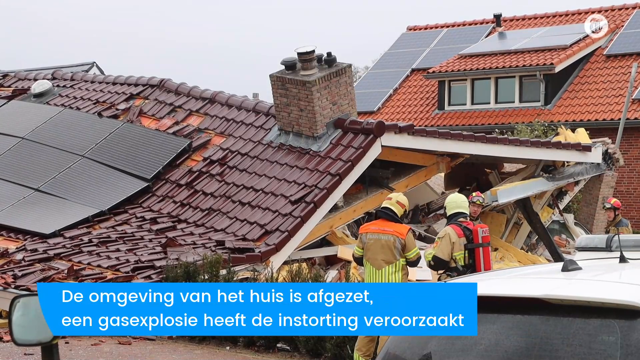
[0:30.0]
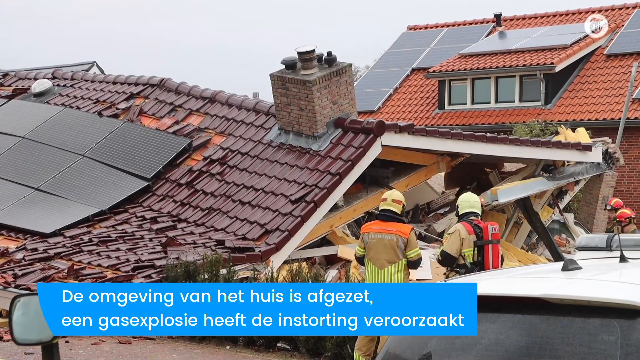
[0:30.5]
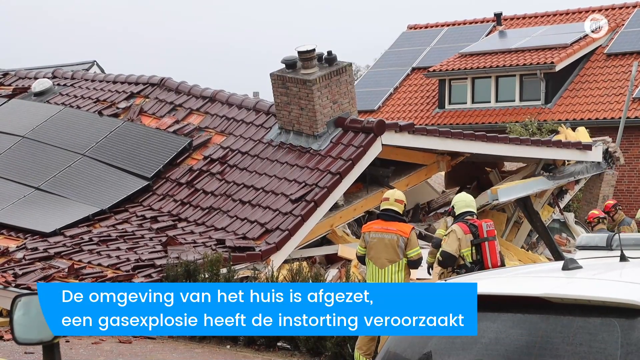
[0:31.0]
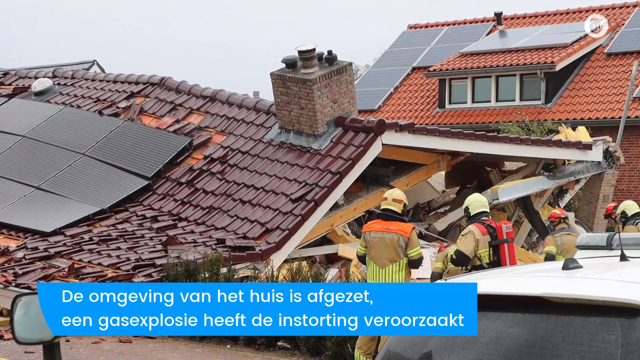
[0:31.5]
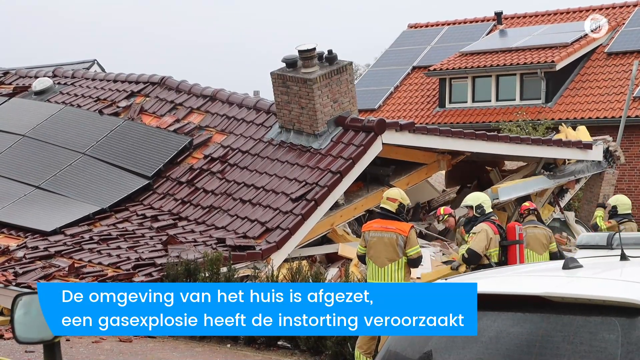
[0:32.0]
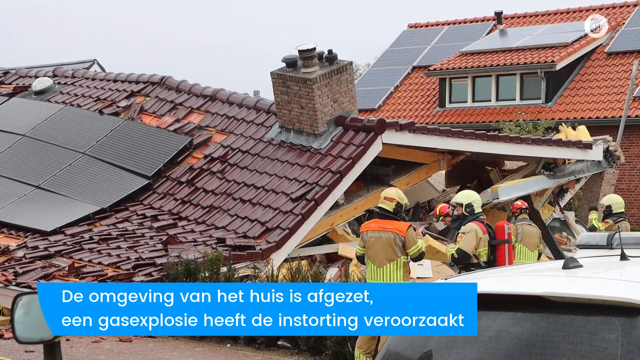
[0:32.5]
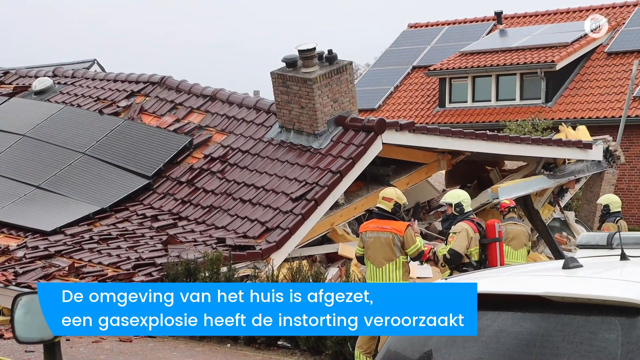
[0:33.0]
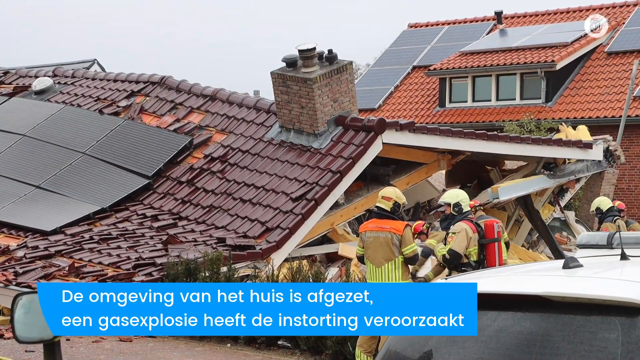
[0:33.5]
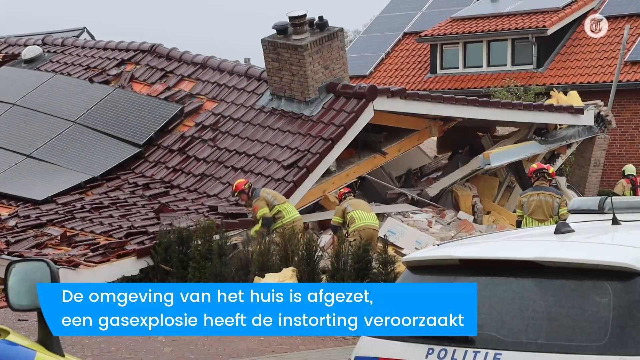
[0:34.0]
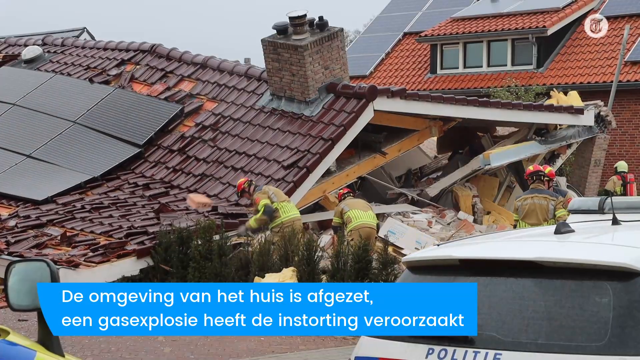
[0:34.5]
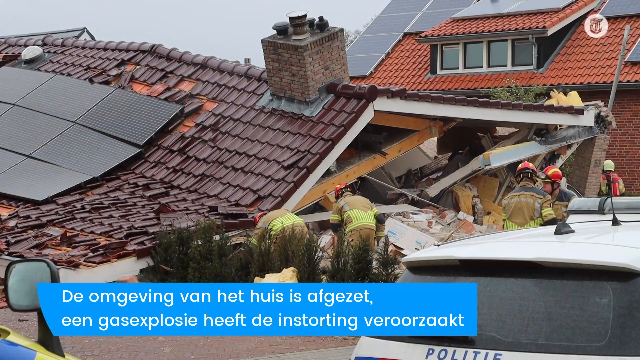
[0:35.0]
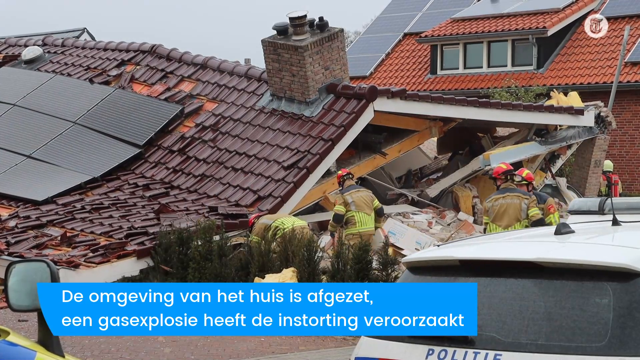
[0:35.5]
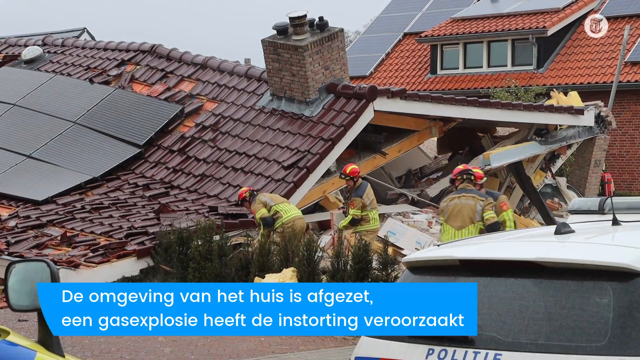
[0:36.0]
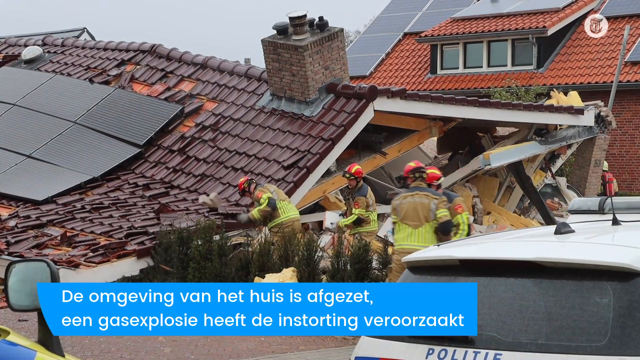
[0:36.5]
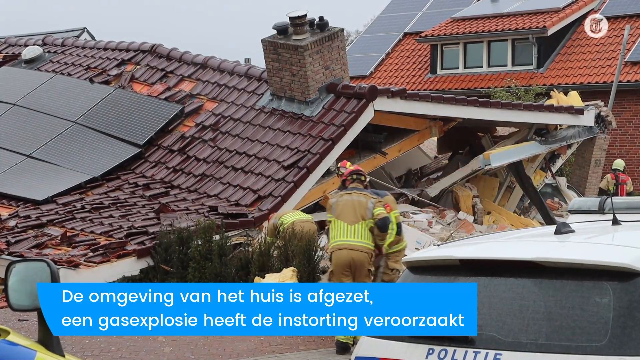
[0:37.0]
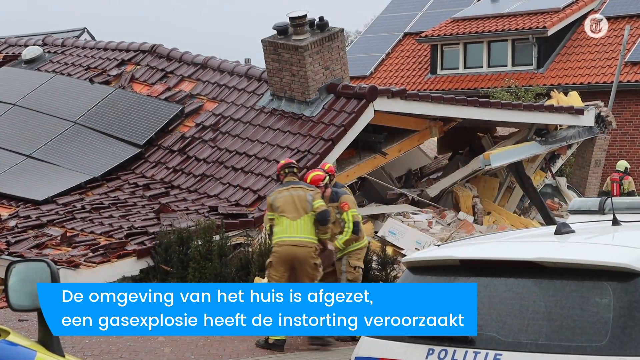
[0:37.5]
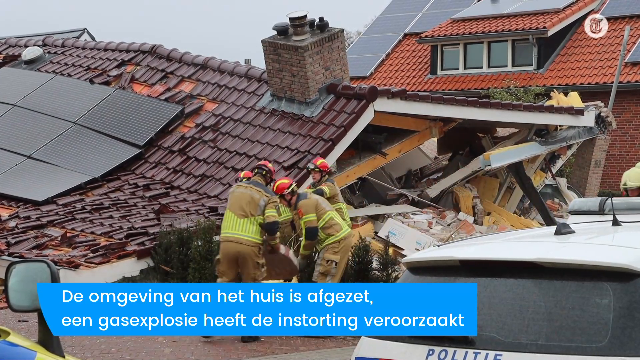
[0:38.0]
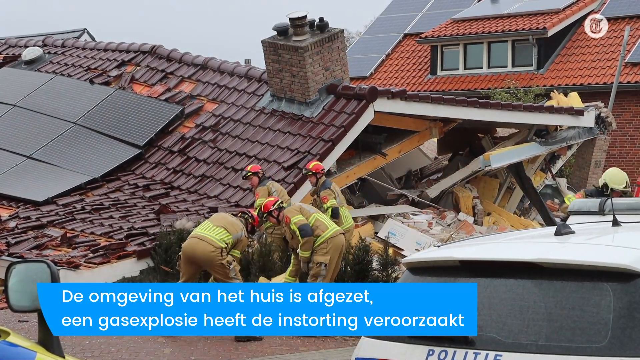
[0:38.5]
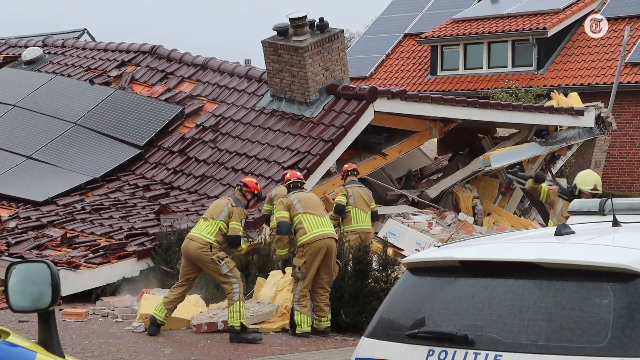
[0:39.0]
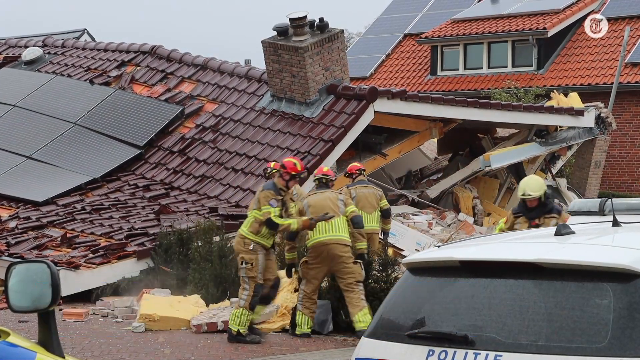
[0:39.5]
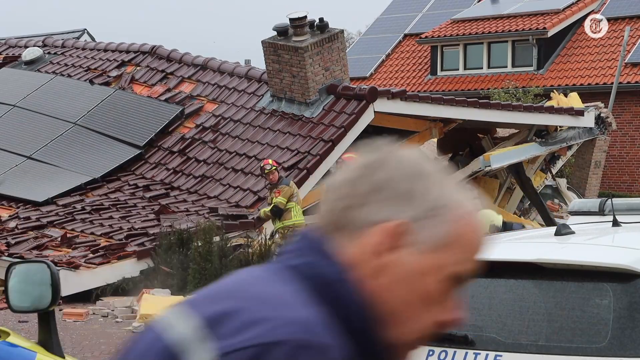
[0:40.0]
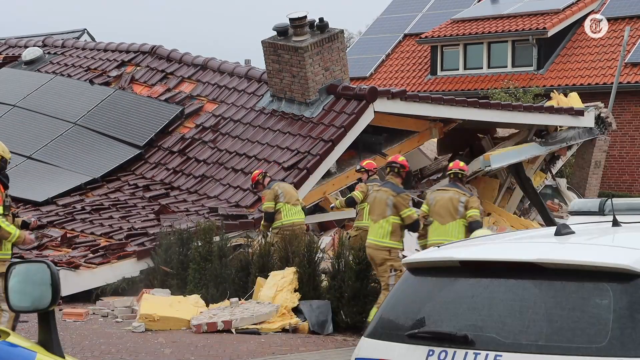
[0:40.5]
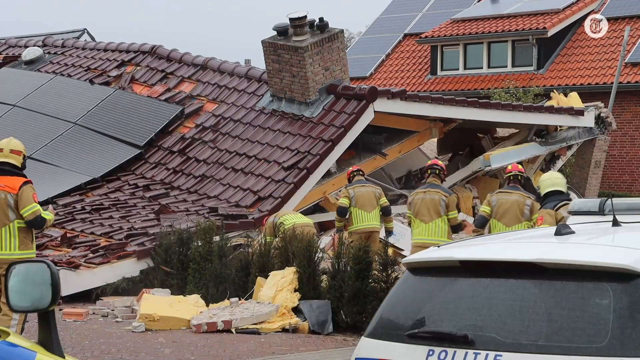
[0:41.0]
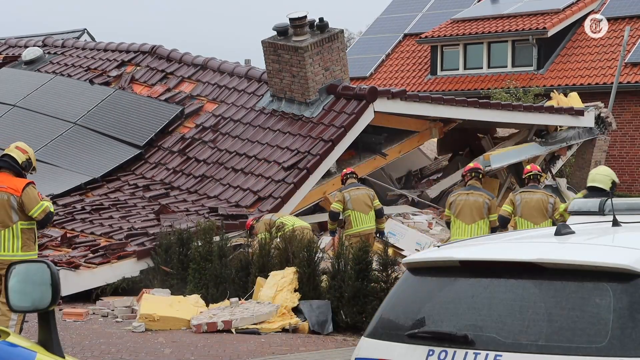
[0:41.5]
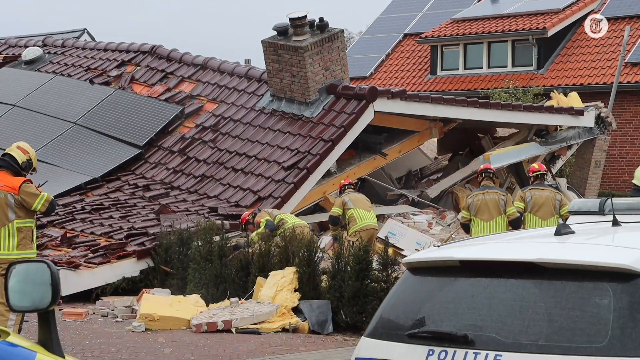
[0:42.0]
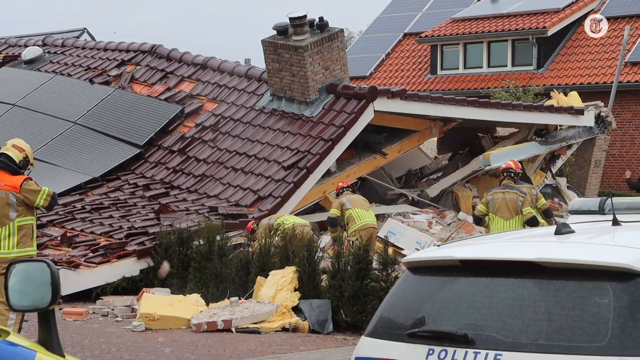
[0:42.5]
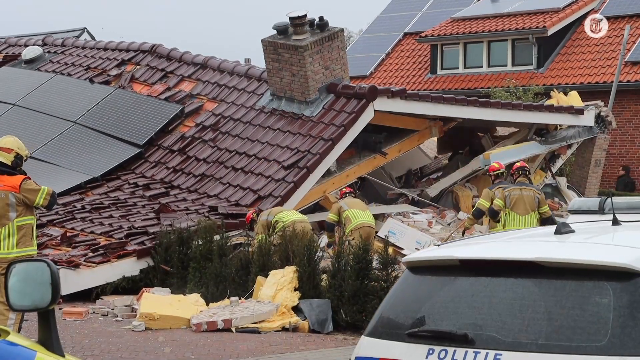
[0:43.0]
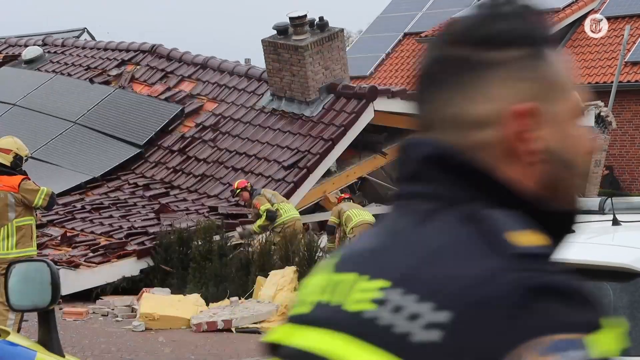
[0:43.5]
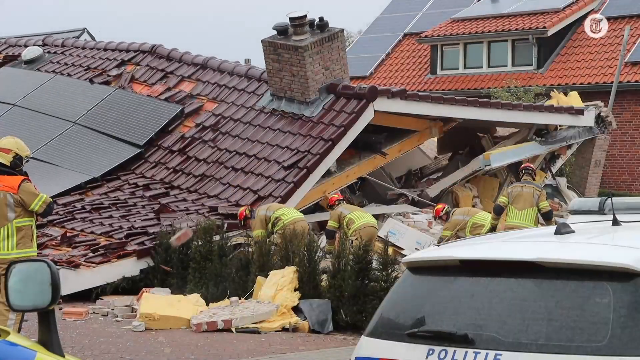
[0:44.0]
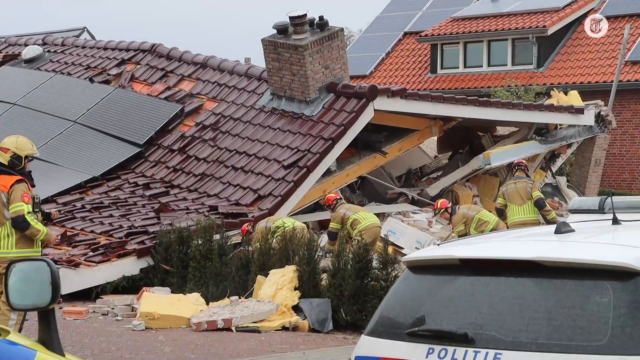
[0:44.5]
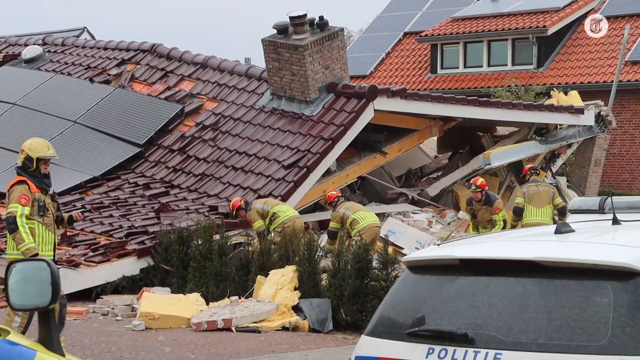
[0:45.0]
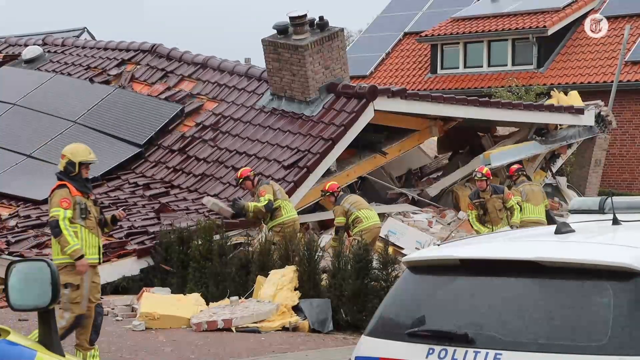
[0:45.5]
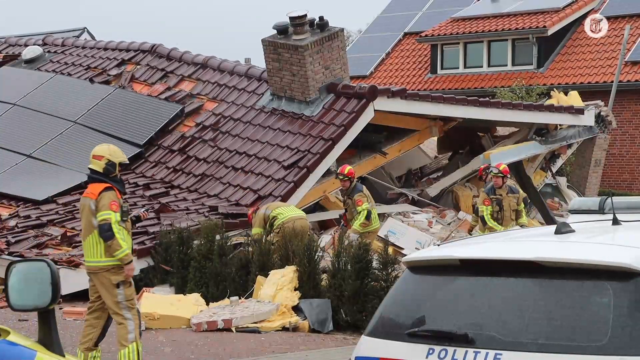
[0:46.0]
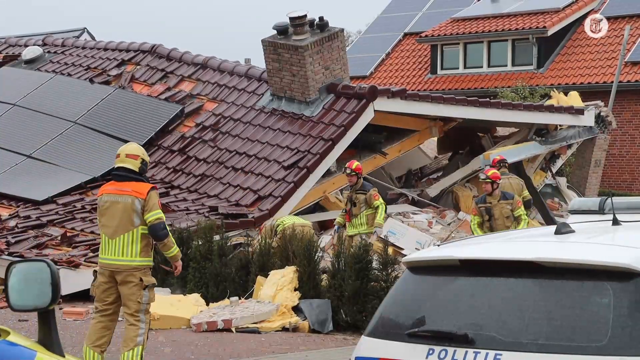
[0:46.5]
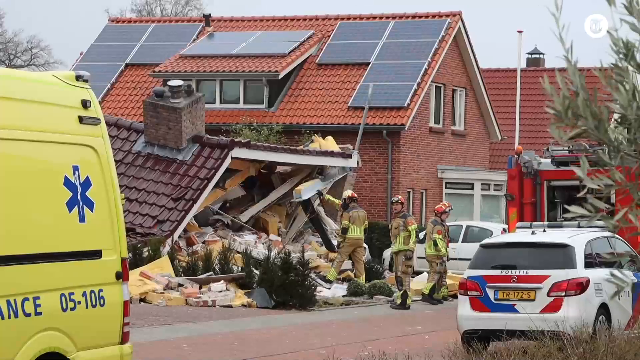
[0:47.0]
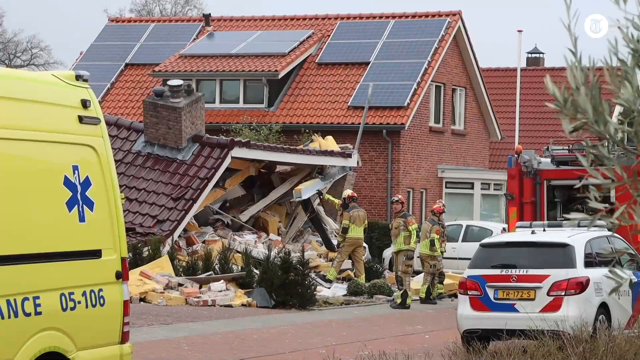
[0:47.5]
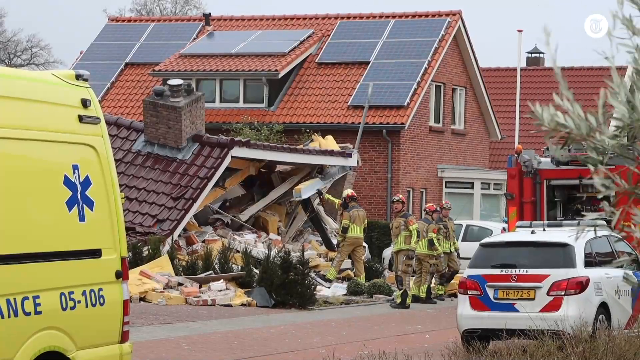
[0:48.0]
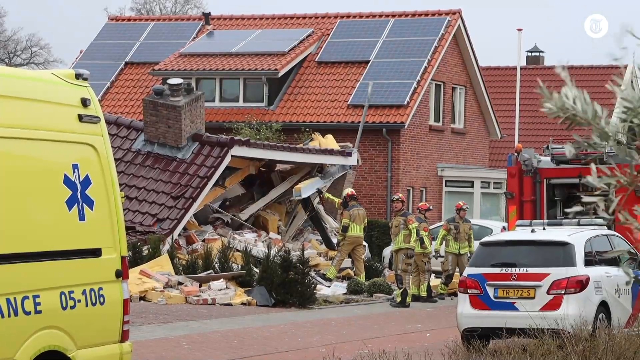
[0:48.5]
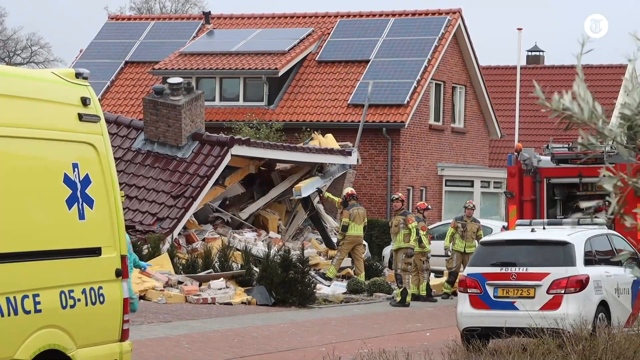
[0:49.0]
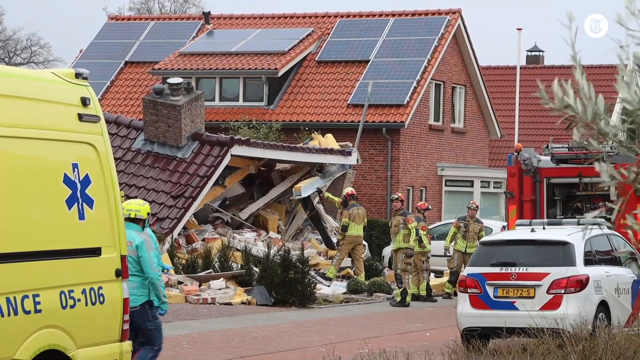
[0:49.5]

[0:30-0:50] The news story seems to be about a badly damaged house. The house has a brown shingled roof with a chimney on top and solar panels on it, and the house is pretty much completely demolished. Only the roof seems kind of intact, pretty much sitting on the ground atop a bed of broken house debris. A few emergency workers, such as firemen and paramedics, are on the scene, all wearing helmets and bright jackets. At first they seem to be kind of standing in front of the house looking at it, assessing how to get their work started. A few more firemen then join them, and together they start clearing the debris, grabbing different pieces of the house and junk and moving them out of the front entrance area of the house.